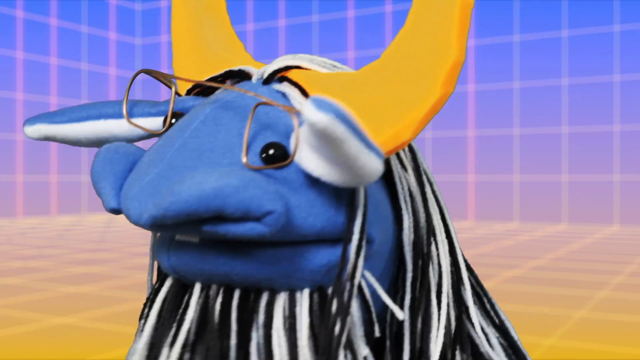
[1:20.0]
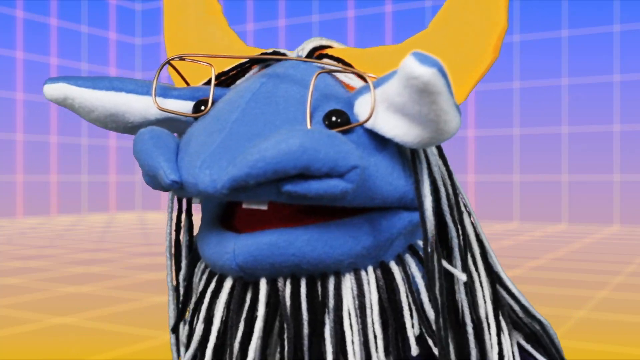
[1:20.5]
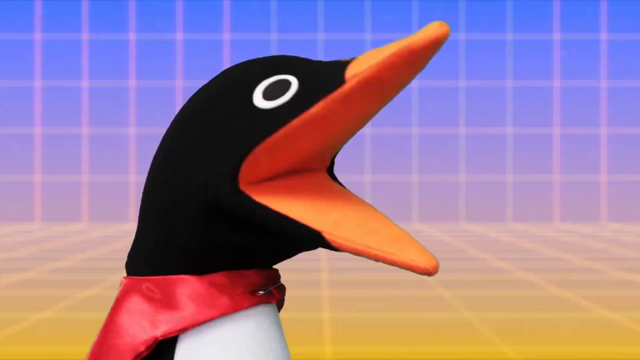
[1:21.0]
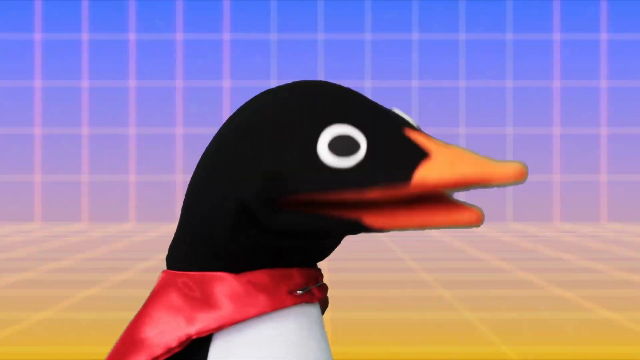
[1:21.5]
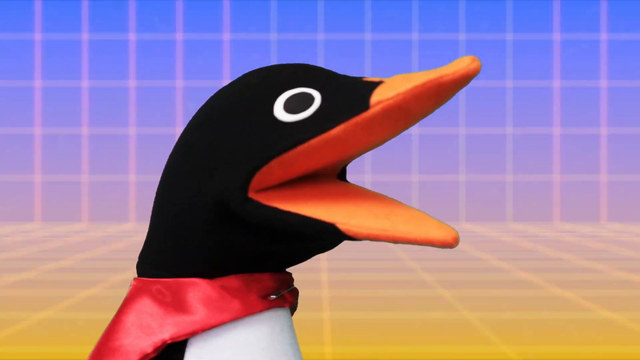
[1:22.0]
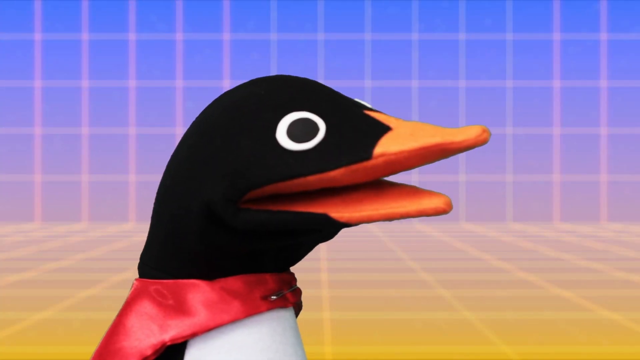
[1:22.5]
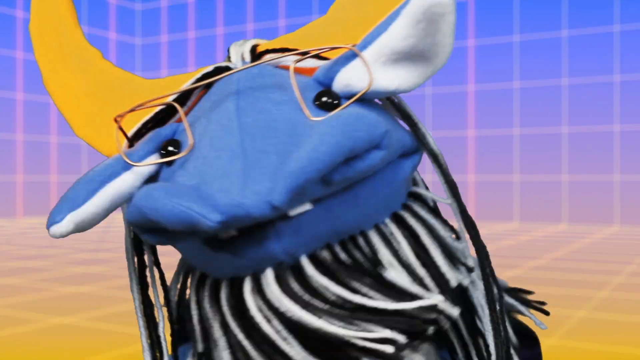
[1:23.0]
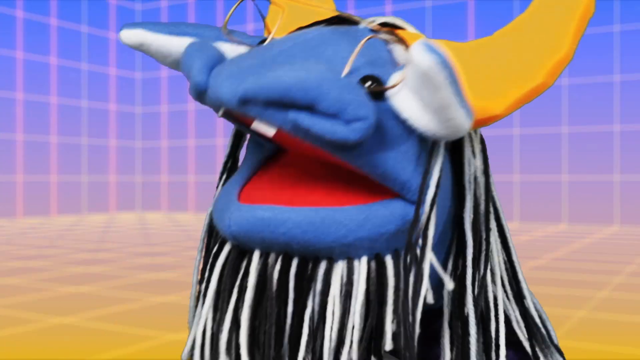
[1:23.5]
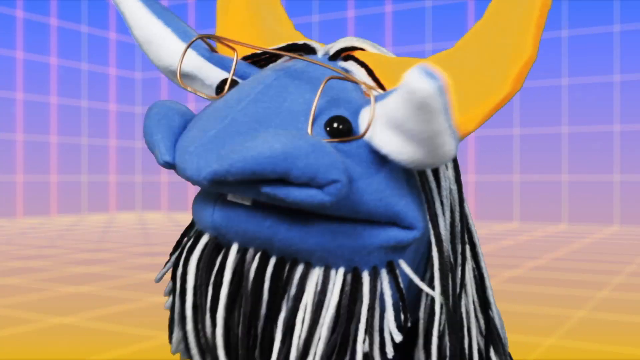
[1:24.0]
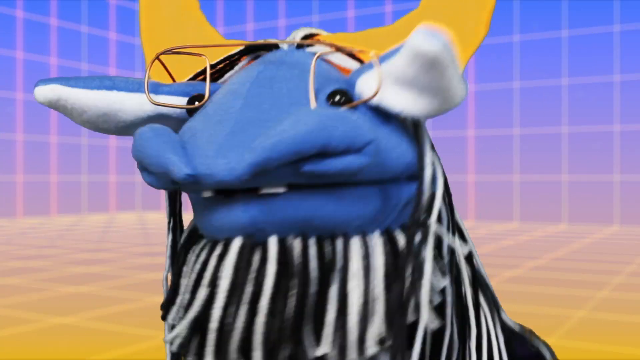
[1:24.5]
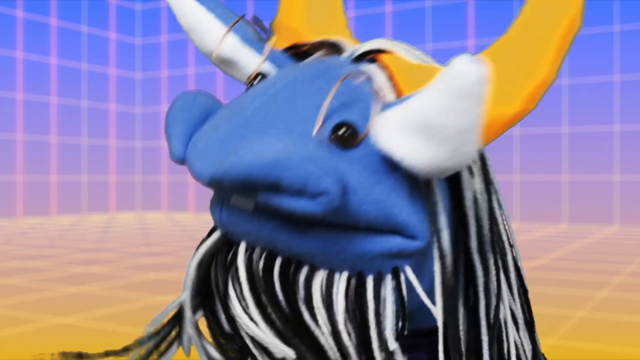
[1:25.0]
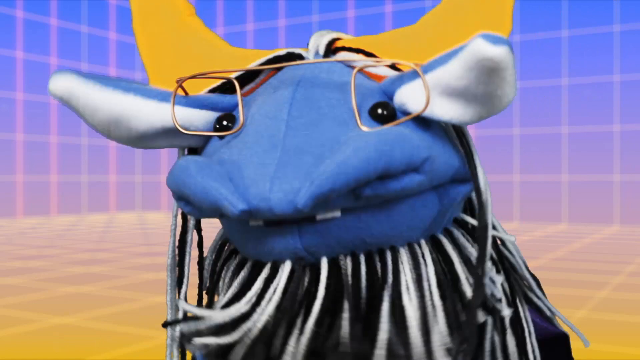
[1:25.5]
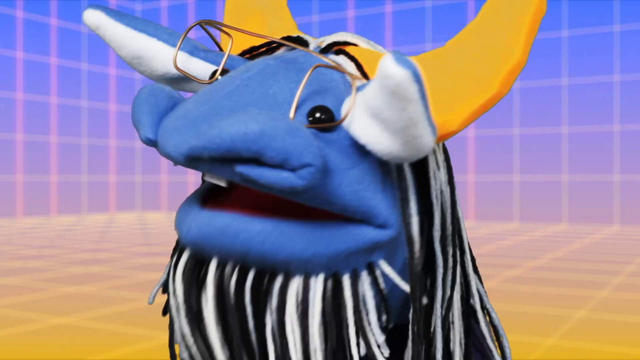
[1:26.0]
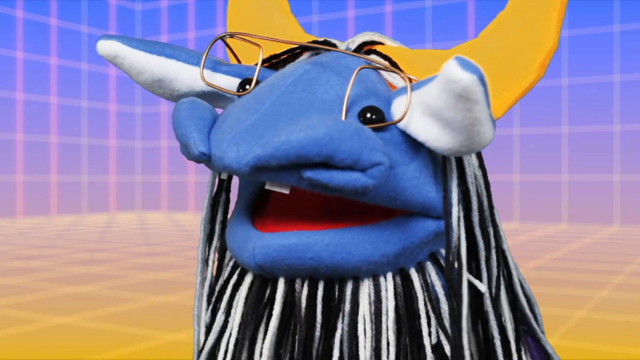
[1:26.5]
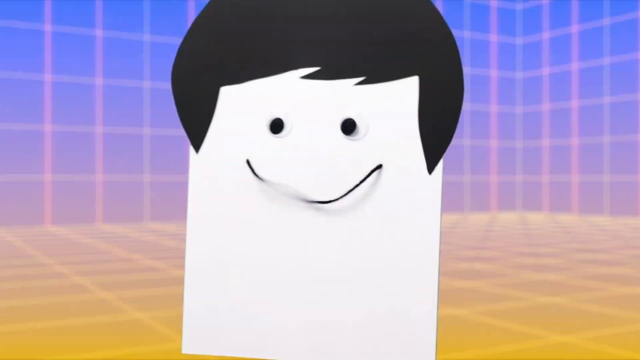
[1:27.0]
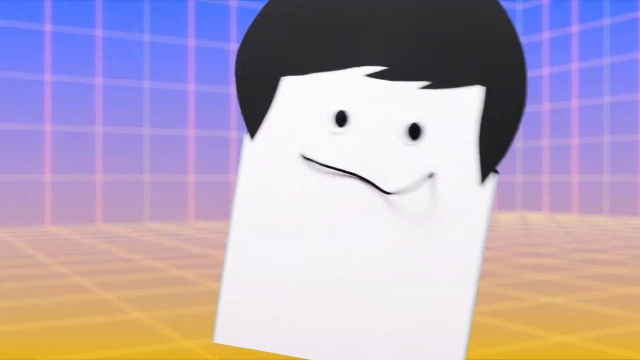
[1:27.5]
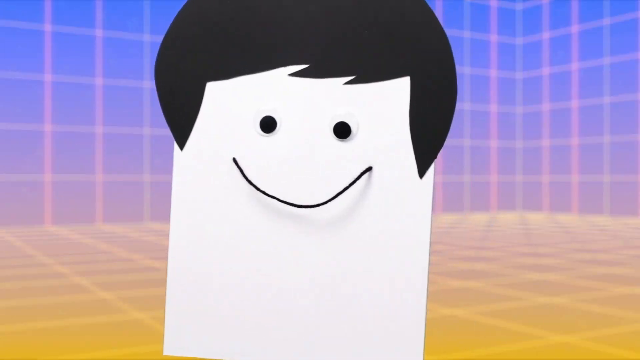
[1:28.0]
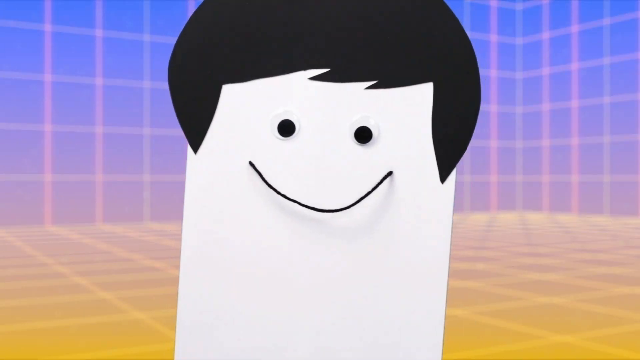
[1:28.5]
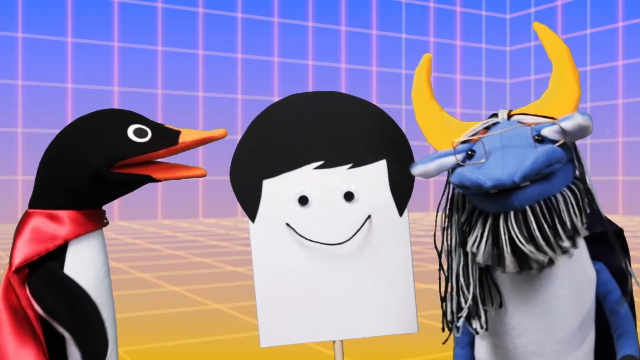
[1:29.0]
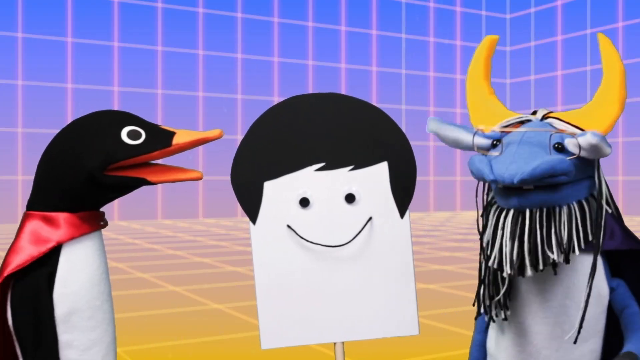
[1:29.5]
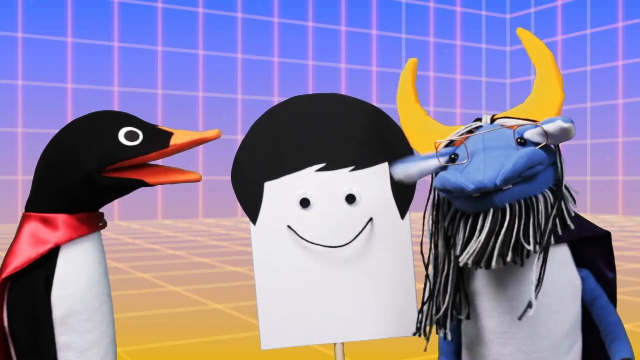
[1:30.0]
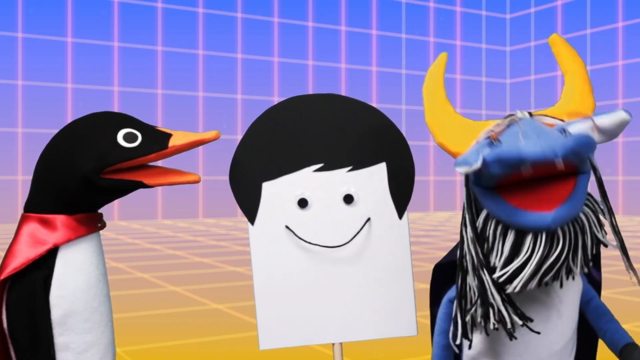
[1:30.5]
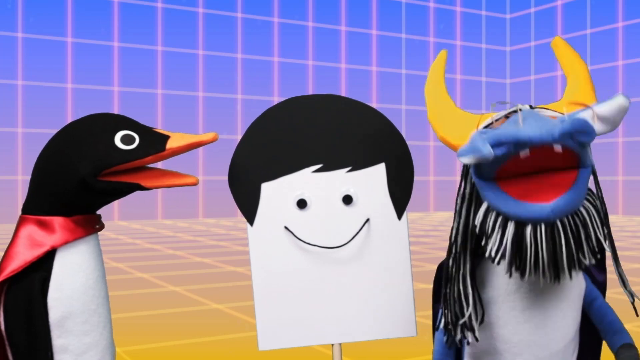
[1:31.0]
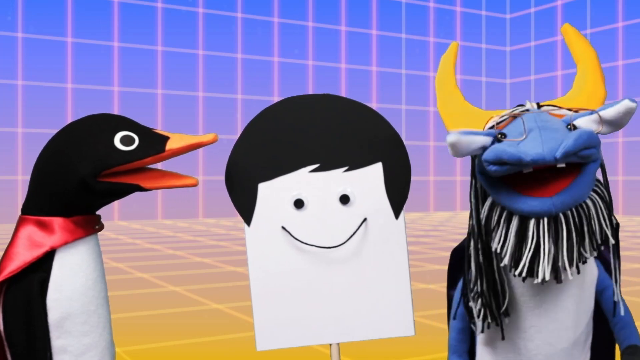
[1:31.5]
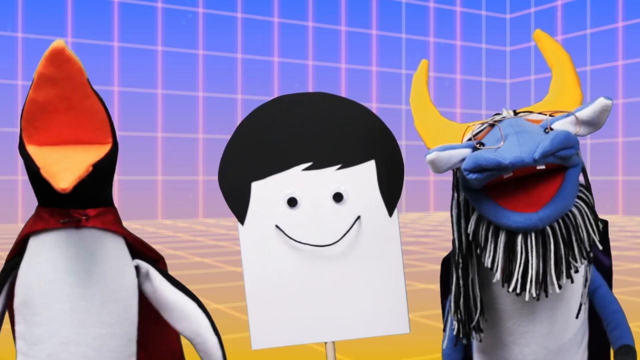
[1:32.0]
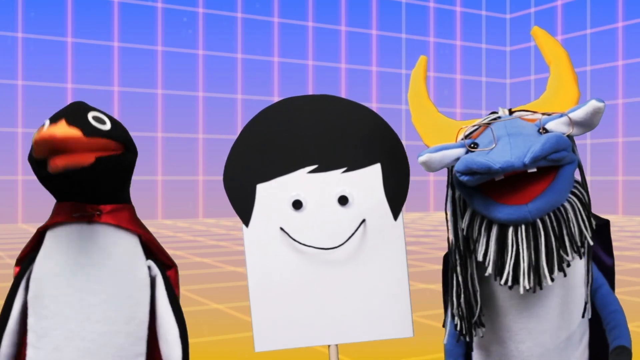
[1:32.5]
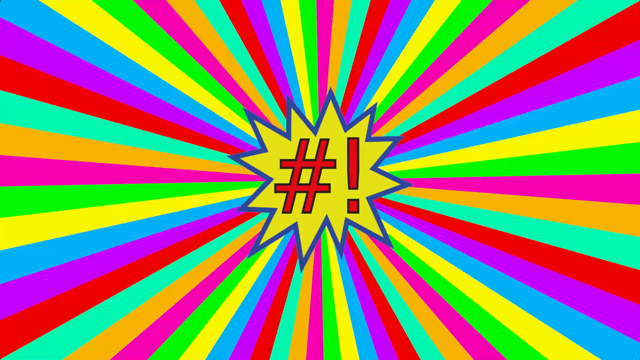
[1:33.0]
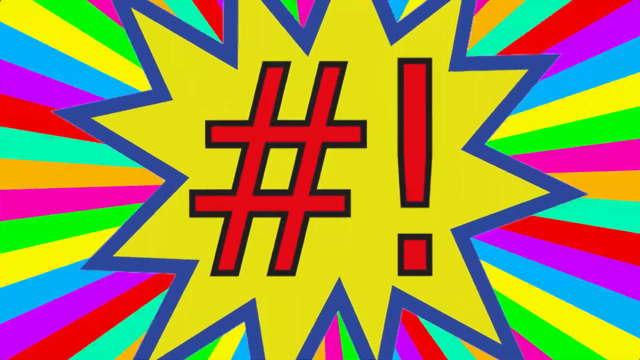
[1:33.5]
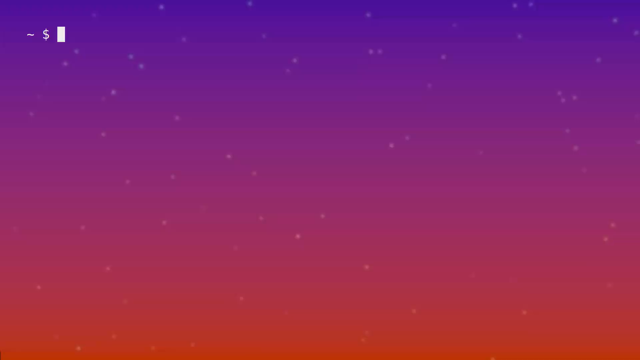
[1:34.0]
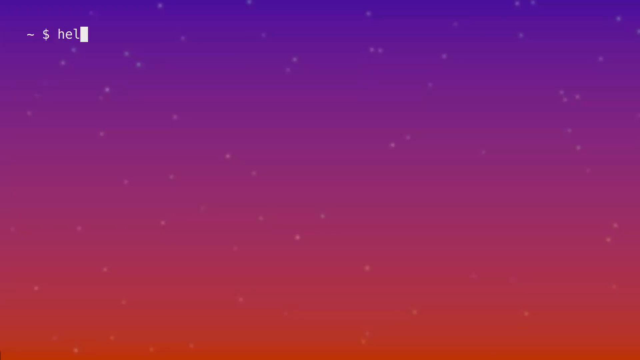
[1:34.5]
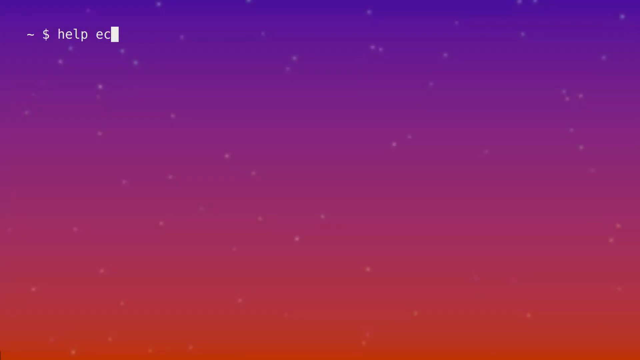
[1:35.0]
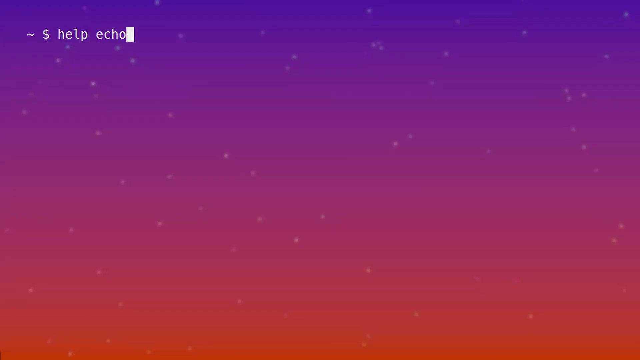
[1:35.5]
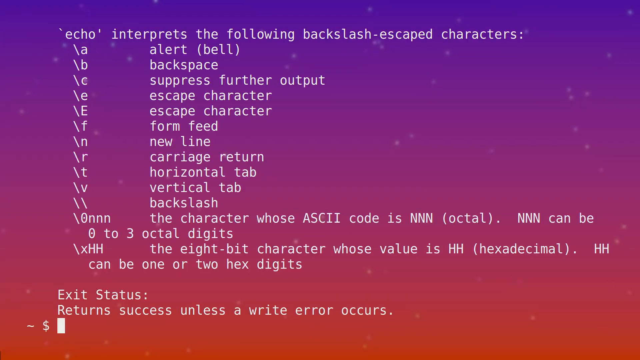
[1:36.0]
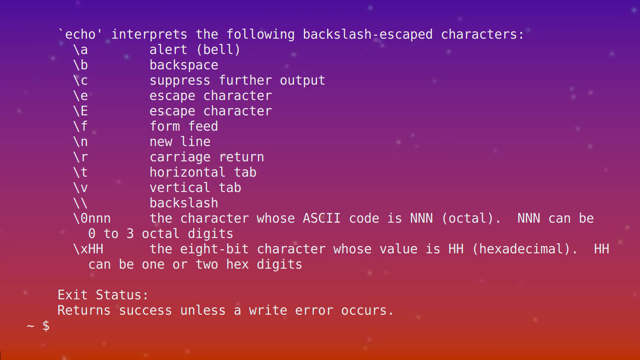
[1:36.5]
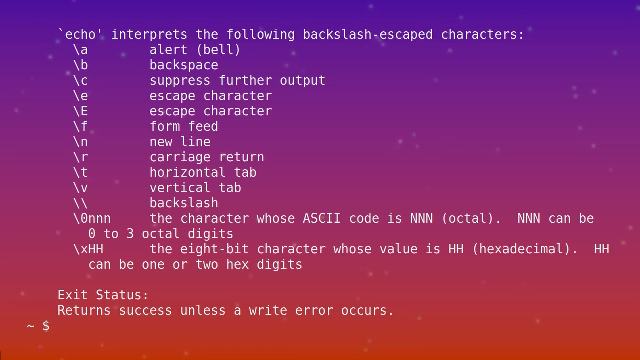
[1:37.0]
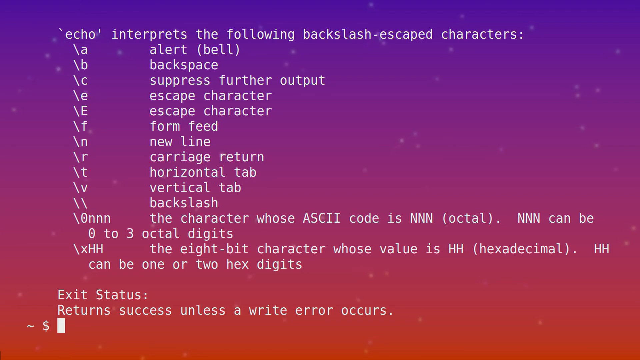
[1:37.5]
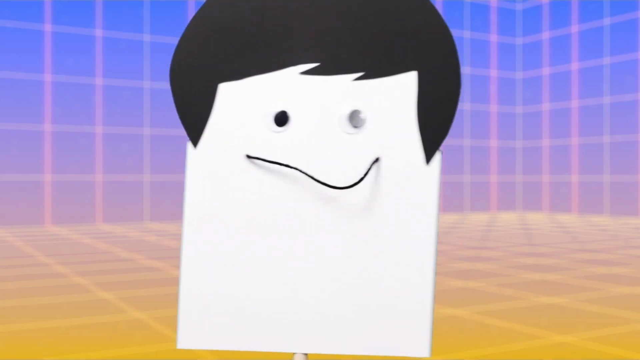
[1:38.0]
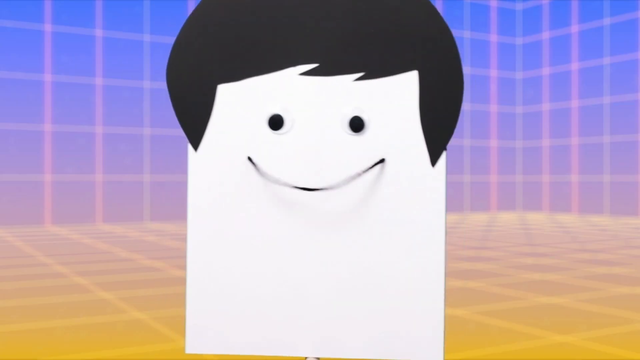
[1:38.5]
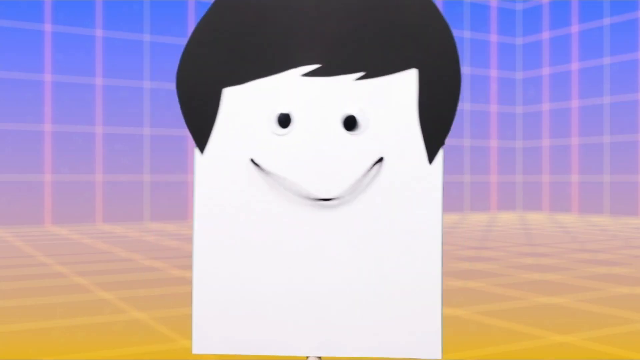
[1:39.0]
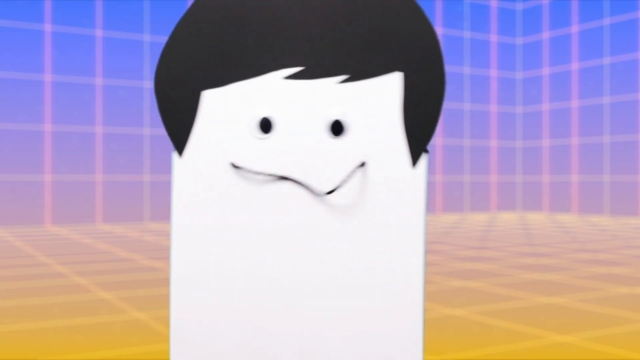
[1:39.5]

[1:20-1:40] The camera is zoomed in on the gnu's face as he nods his head and talks a little. Then the camera is zoomed in on the penguin's face, showing its right side; it faces to the viewer's right, its mouth opening and closing as it talks. Back on the gnu, he talks and turns his head back and forth; his beard is also made of black and white strands of yarn, and he has two flappy, pointy ears coming out of the sides of his head. A zoom on the signpost character shows that his eyes are googly eyes glued to the paper. Then all three are shown: the gnu talks at the camera, and then the penguin talks at the camera, opening its mouth really wide.